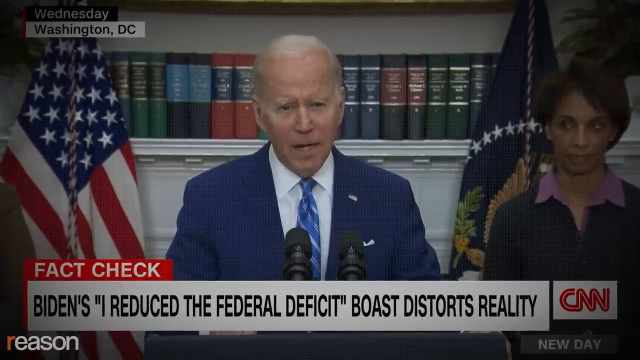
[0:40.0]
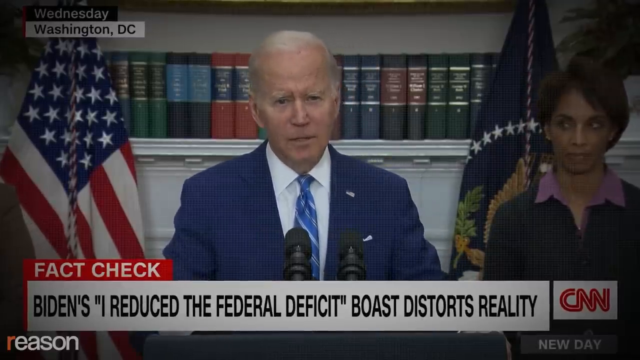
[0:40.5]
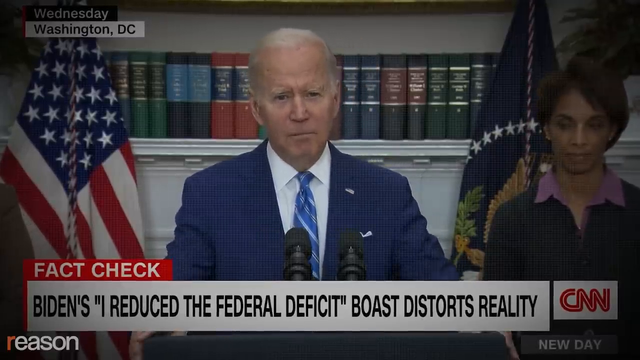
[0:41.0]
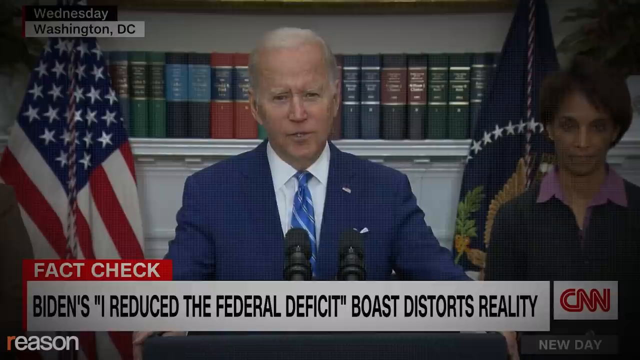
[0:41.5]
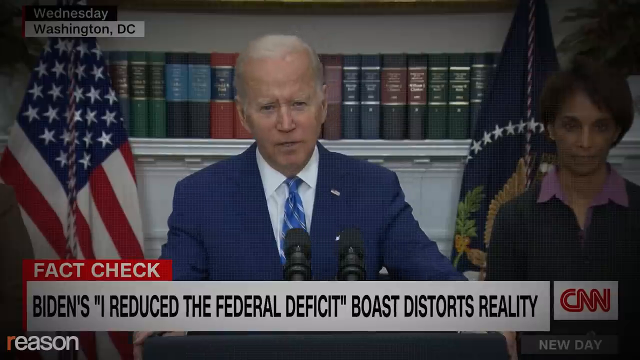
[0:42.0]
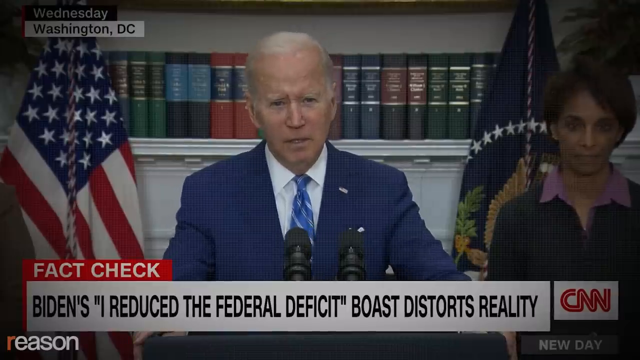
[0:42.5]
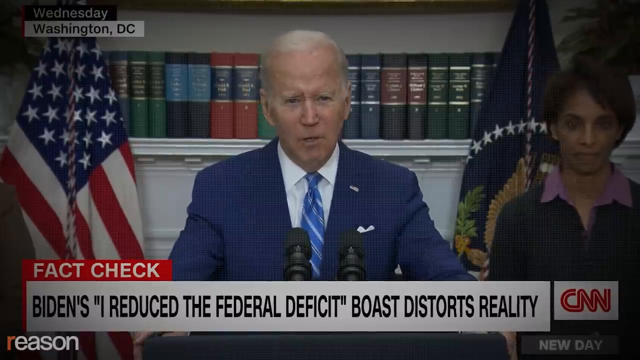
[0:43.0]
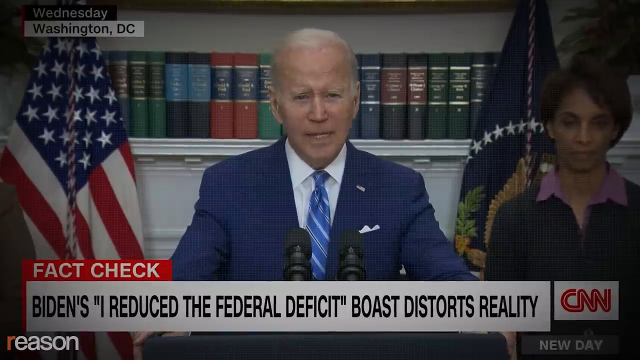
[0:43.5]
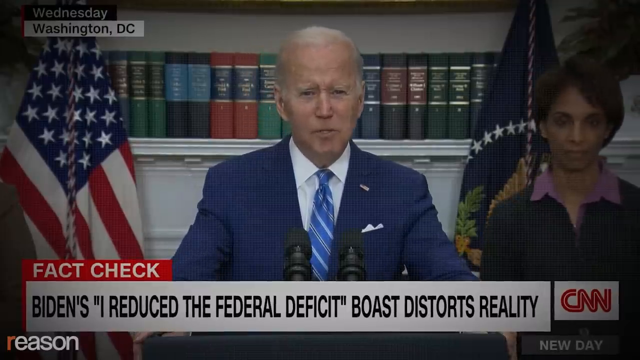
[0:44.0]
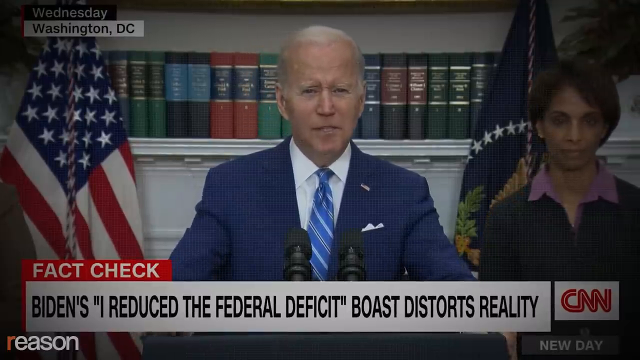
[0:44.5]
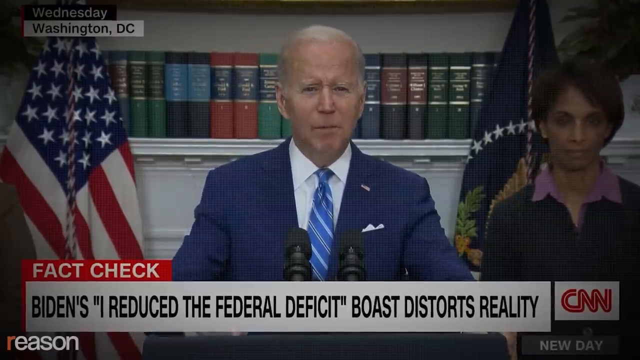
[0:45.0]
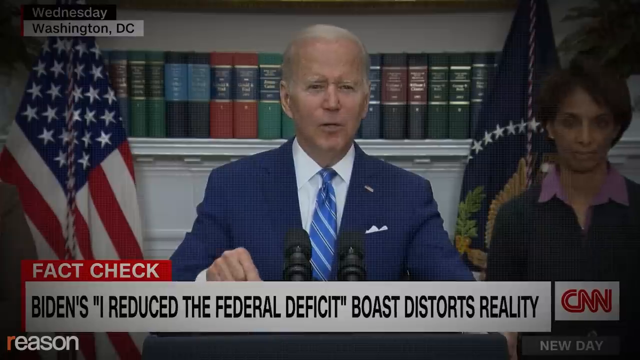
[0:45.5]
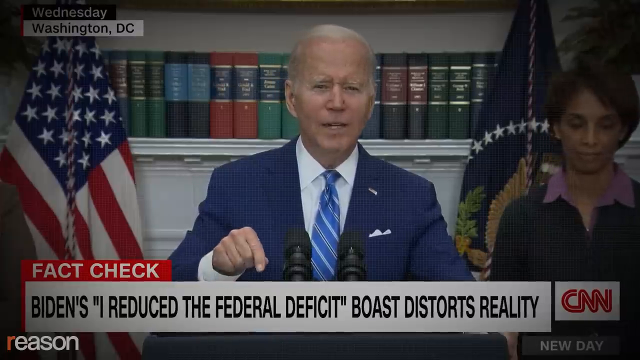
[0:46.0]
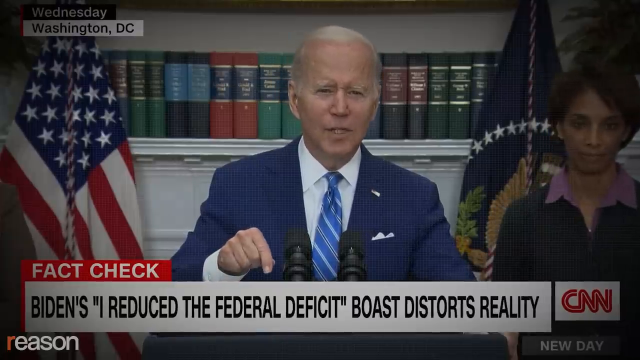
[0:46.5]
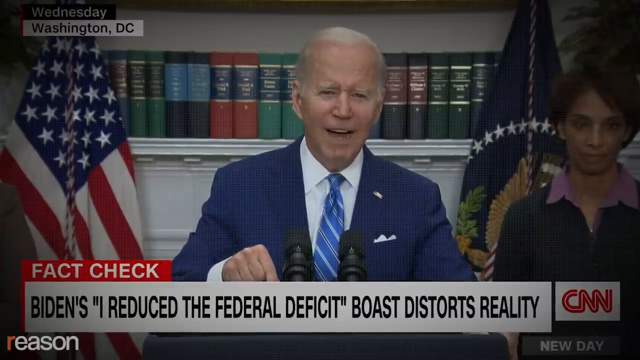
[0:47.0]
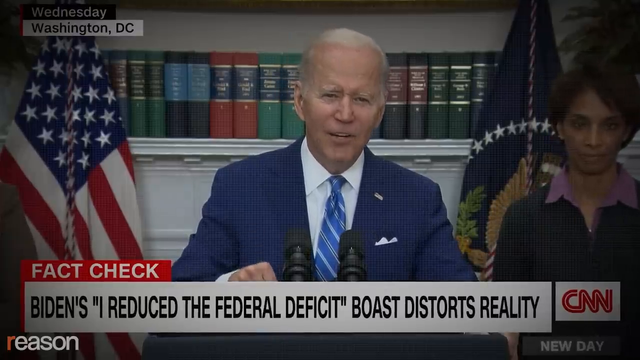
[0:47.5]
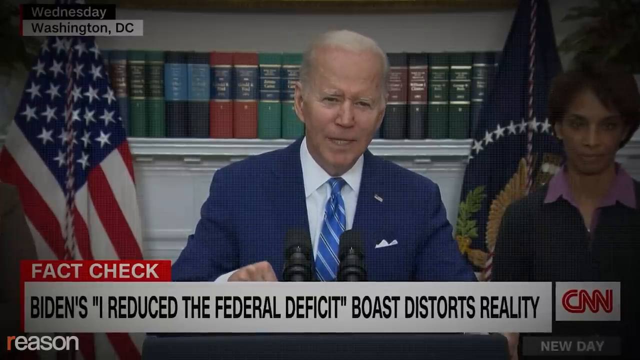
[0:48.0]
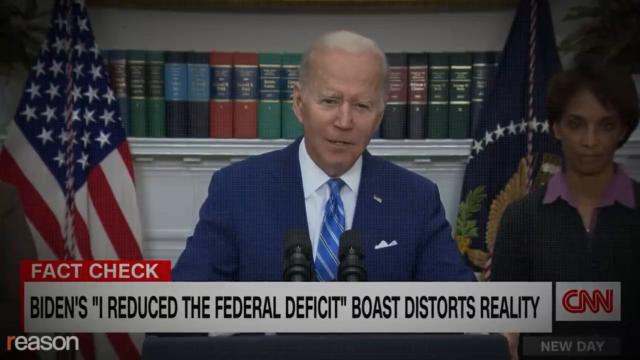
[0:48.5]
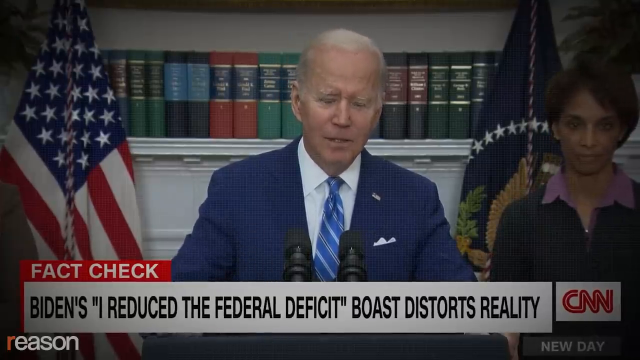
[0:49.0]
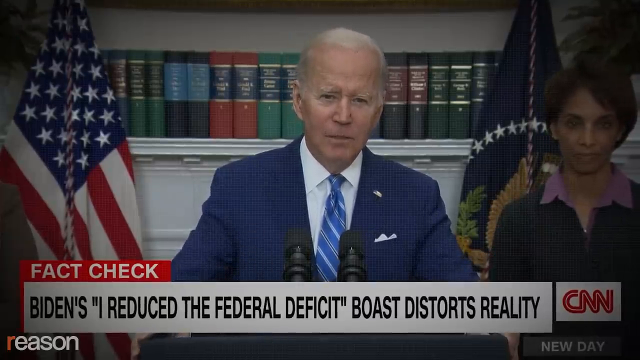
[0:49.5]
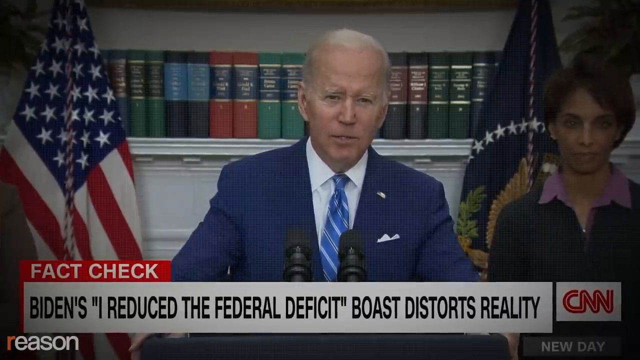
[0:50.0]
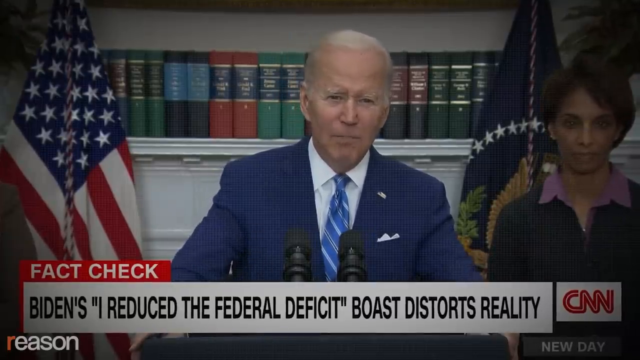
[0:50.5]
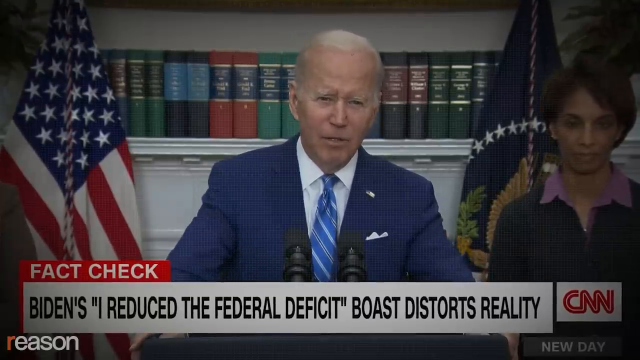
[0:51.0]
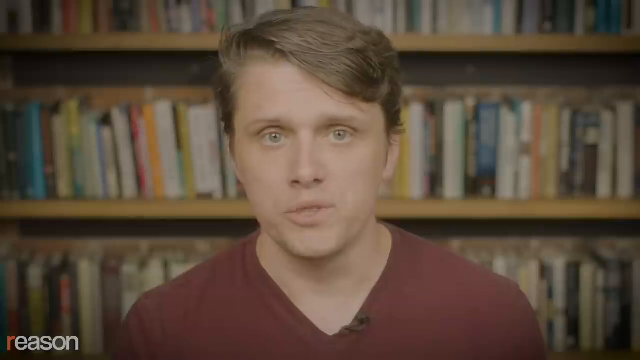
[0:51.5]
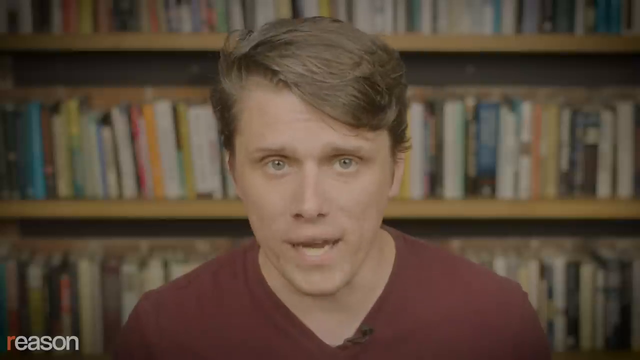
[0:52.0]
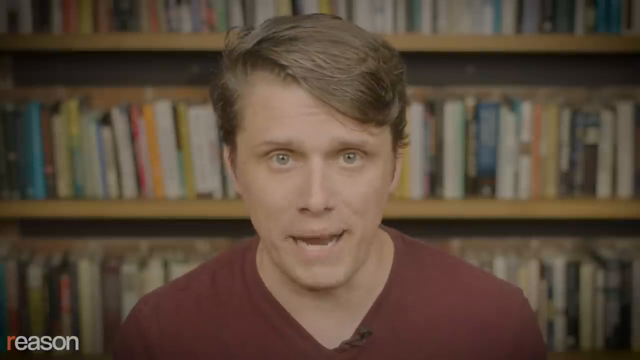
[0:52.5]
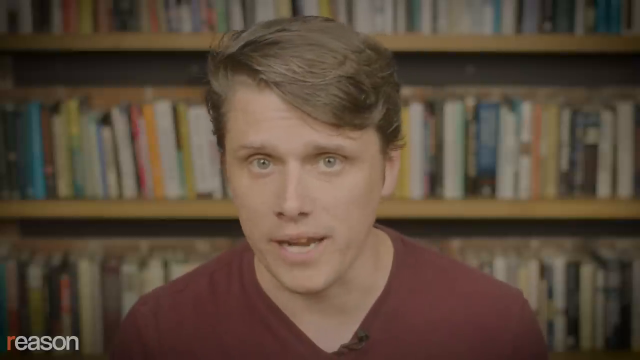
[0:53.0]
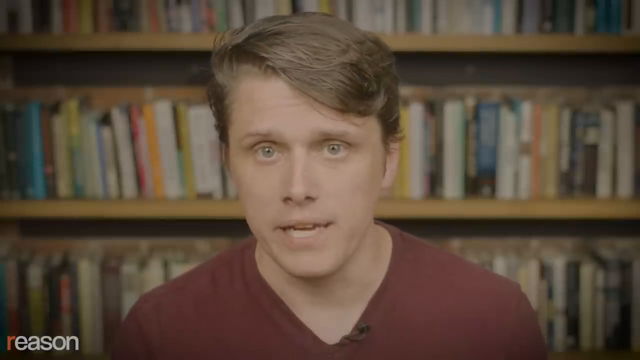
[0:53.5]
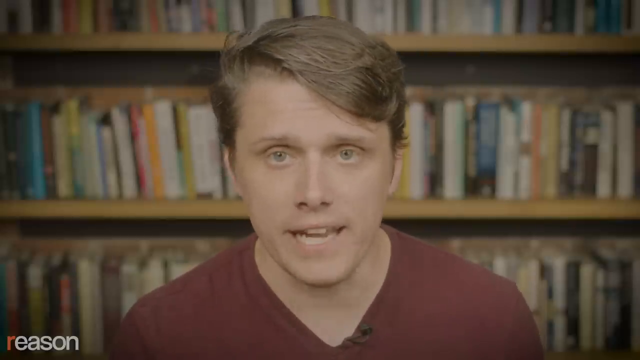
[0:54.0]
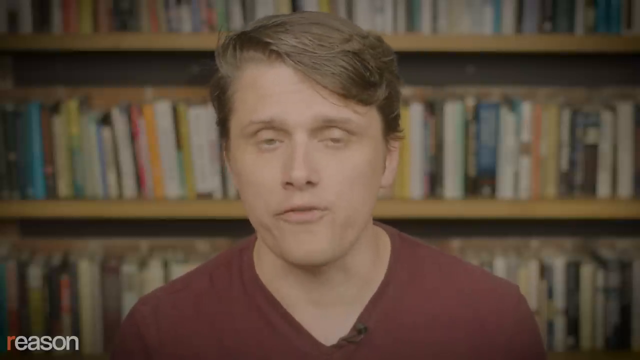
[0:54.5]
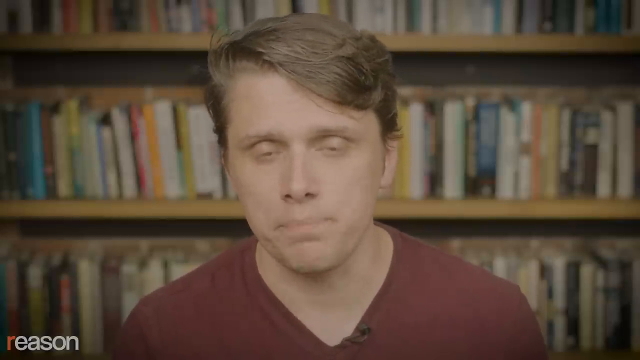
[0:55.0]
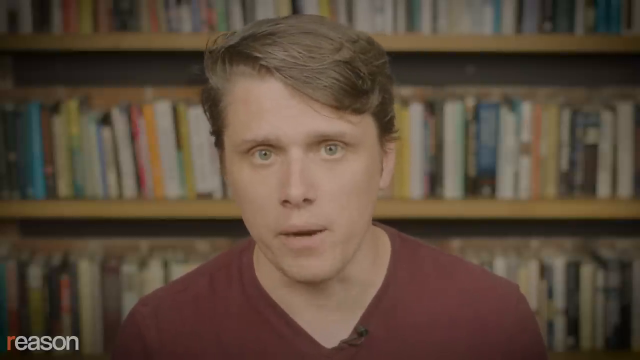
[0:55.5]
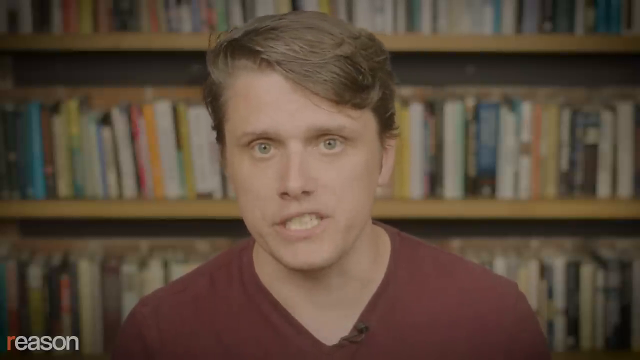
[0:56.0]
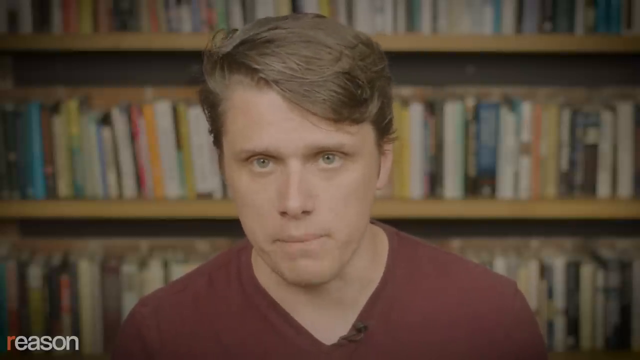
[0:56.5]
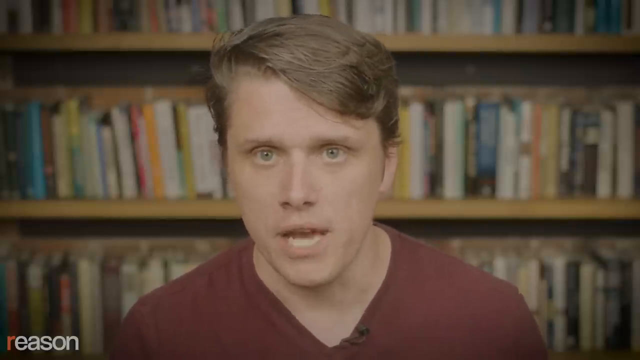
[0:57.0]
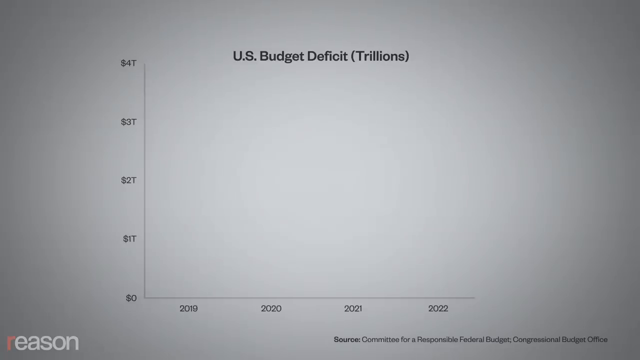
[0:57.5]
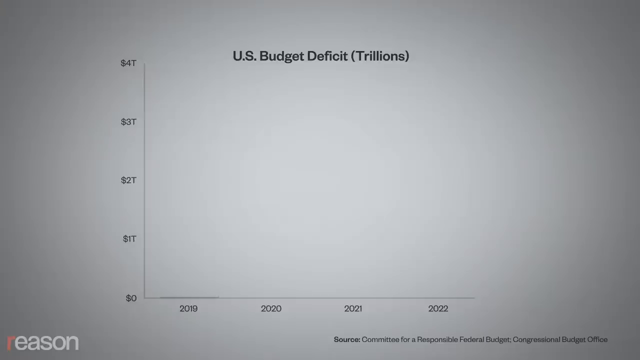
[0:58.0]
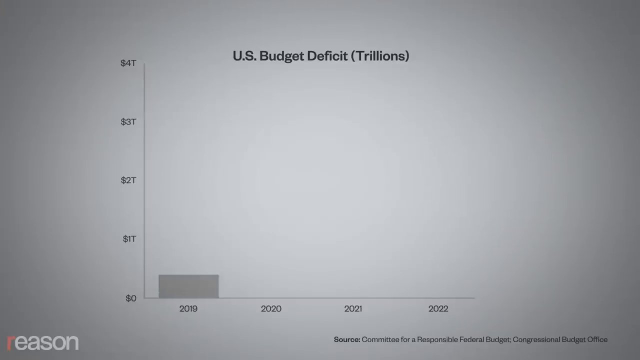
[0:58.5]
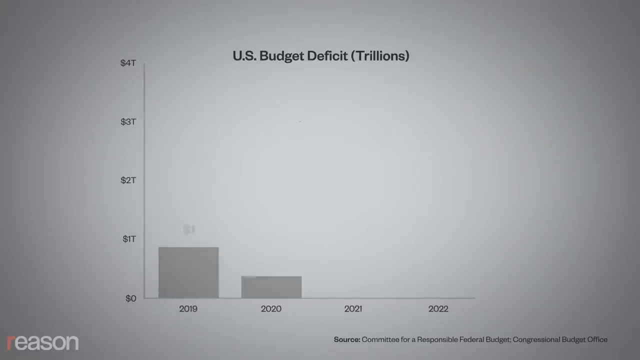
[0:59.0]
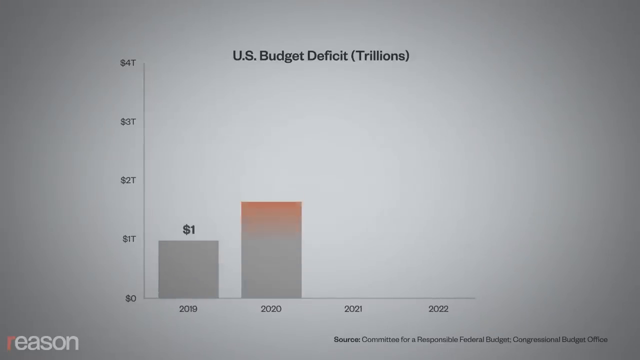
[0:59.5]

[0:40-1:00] After a brief green screen, Biden is still speaking on the CNN platform. The video then cuts to Eric, with "Reason" on the bottom of the screen by him. He is in a room with lots of books on several shelves of a very large bookcase in a medium brown color, perhaps a library. Eric appears to be in his late 20s, a Caucasian young man with brown hair that is mostly straight with a little wave at the ends. He looks a little irritated and serious and is not smiling. A short segment follows showing the US budget deficit in trillions as a bar graph.